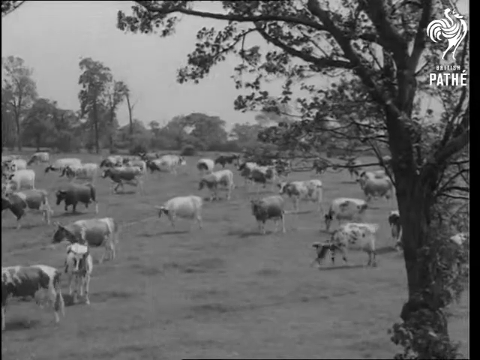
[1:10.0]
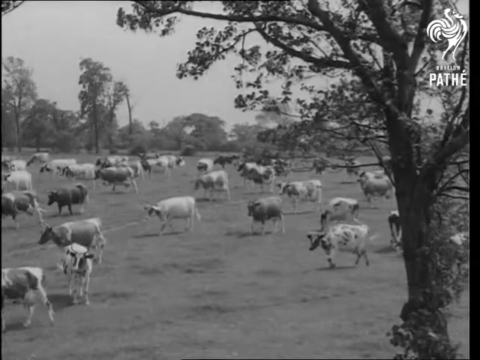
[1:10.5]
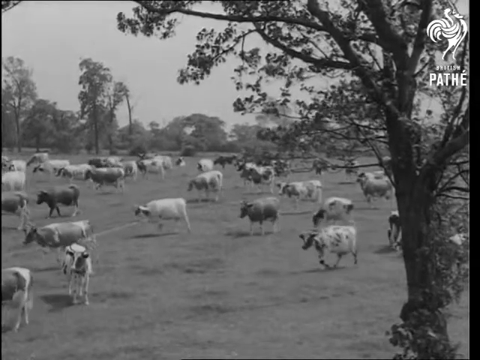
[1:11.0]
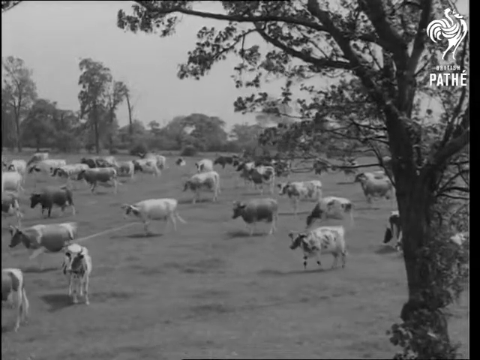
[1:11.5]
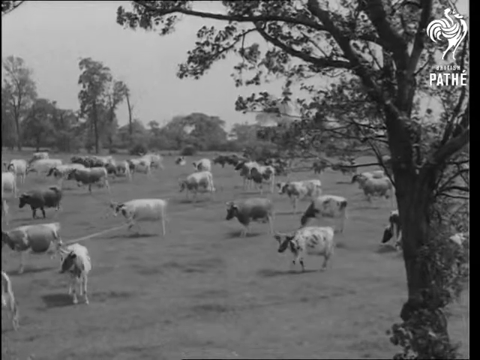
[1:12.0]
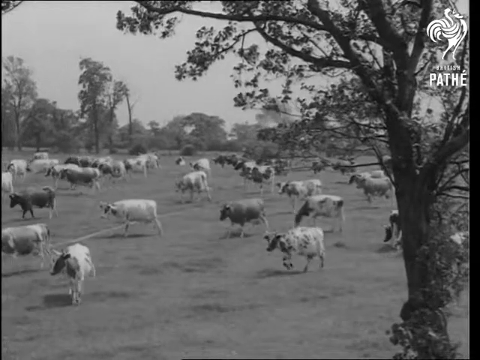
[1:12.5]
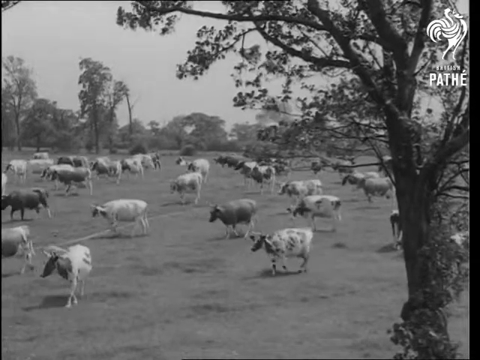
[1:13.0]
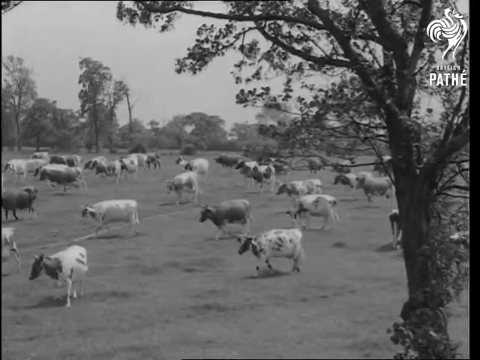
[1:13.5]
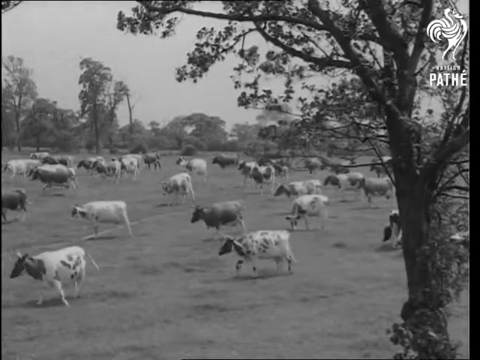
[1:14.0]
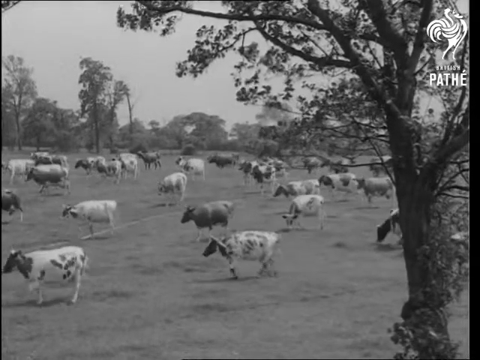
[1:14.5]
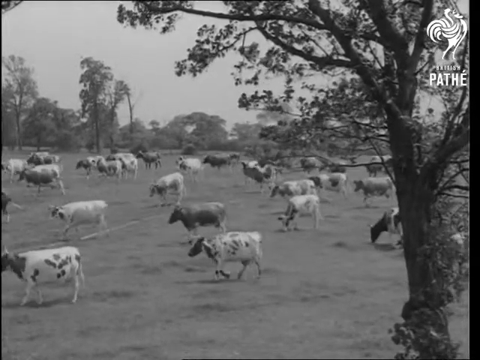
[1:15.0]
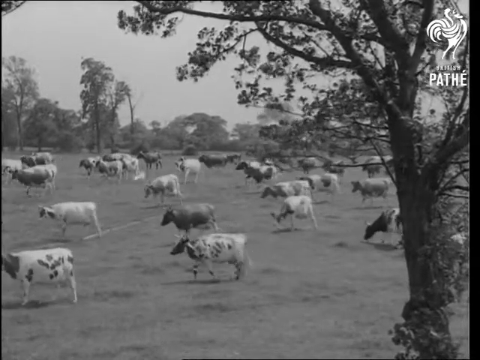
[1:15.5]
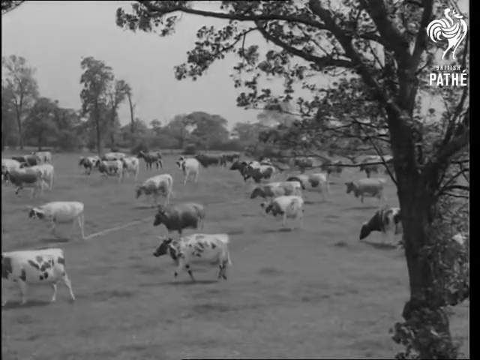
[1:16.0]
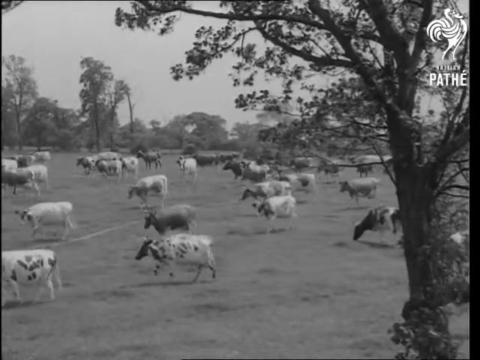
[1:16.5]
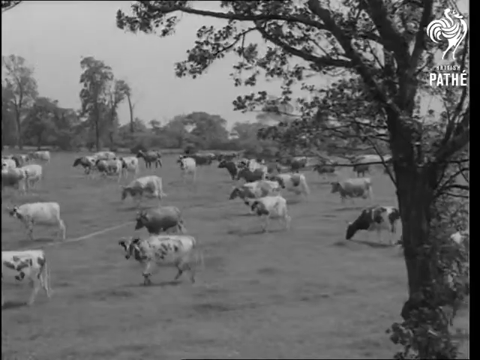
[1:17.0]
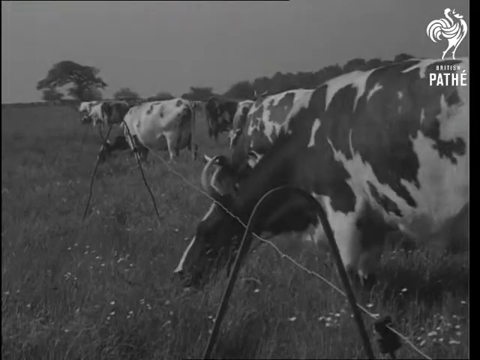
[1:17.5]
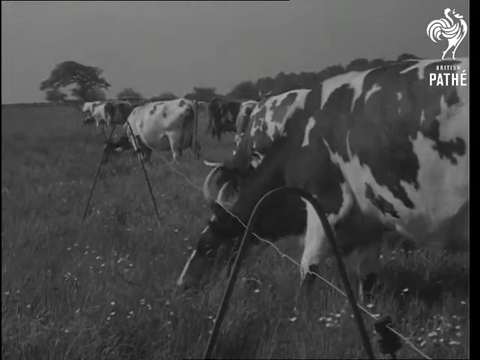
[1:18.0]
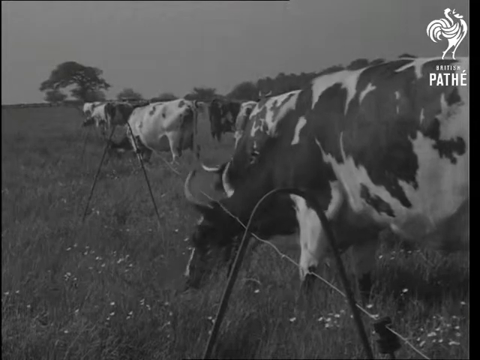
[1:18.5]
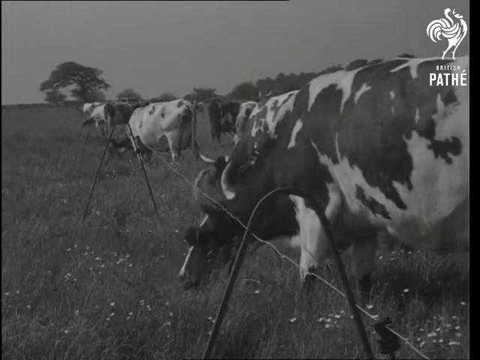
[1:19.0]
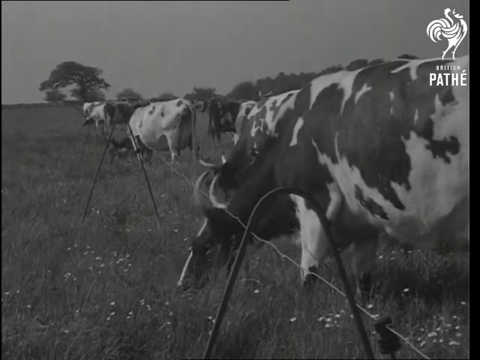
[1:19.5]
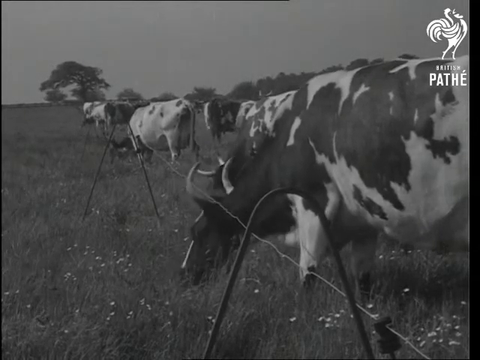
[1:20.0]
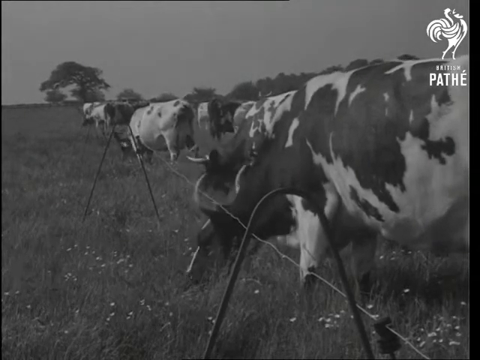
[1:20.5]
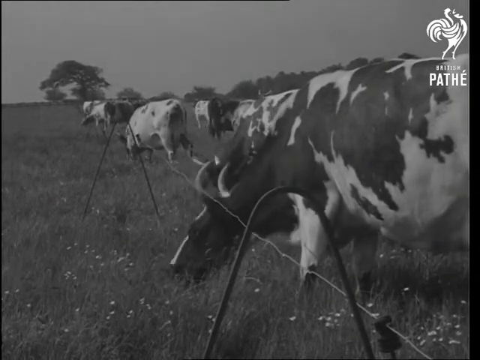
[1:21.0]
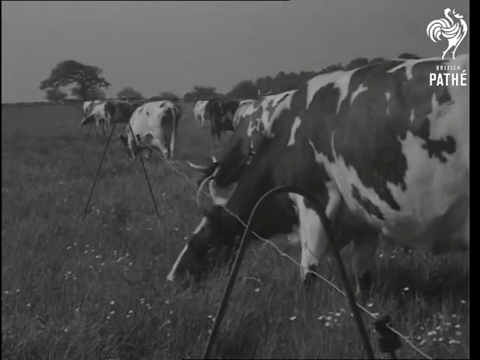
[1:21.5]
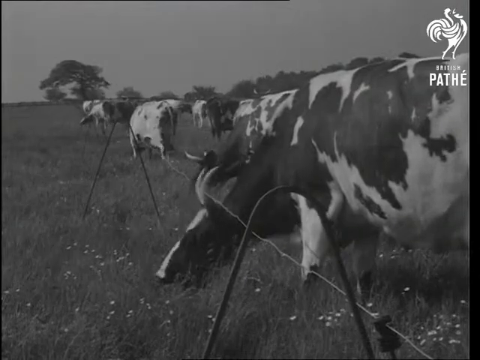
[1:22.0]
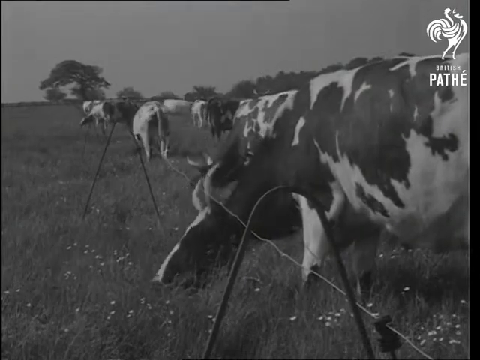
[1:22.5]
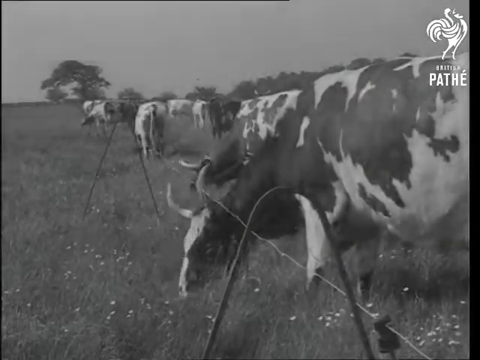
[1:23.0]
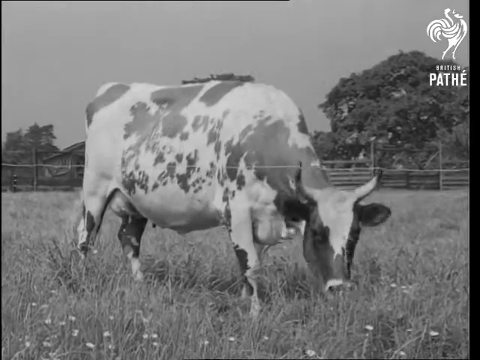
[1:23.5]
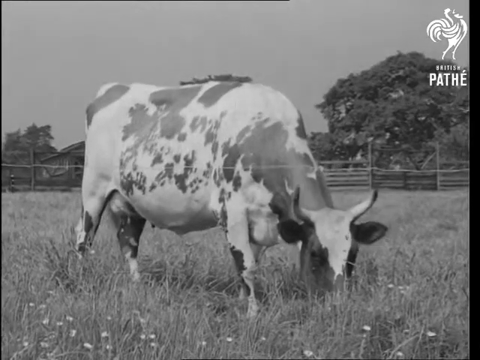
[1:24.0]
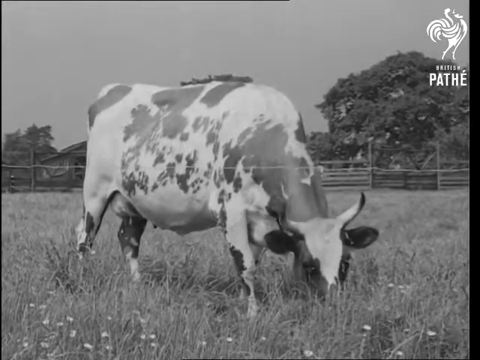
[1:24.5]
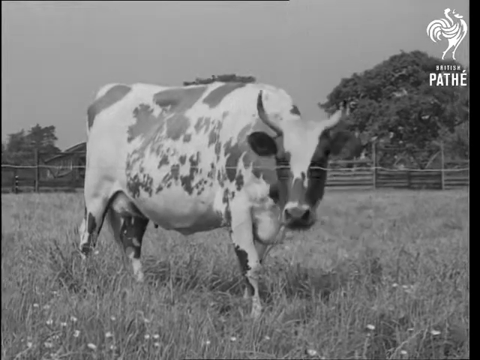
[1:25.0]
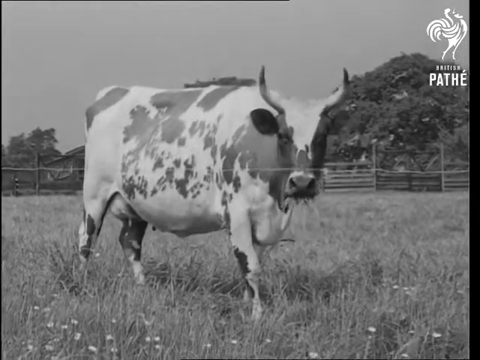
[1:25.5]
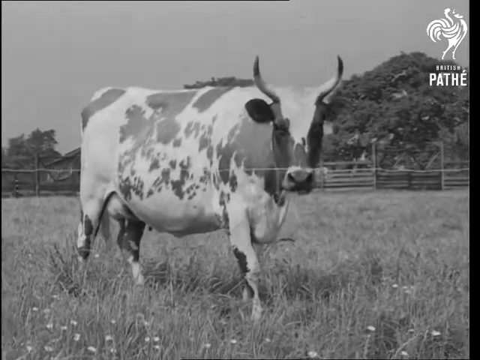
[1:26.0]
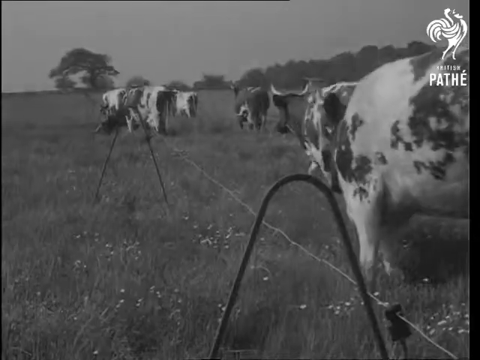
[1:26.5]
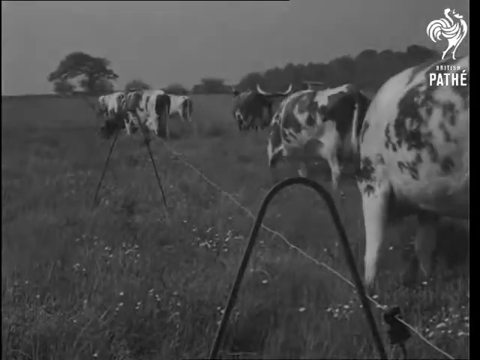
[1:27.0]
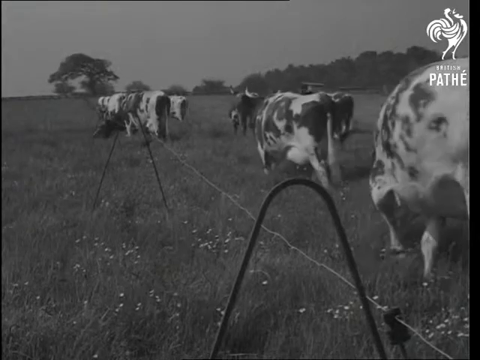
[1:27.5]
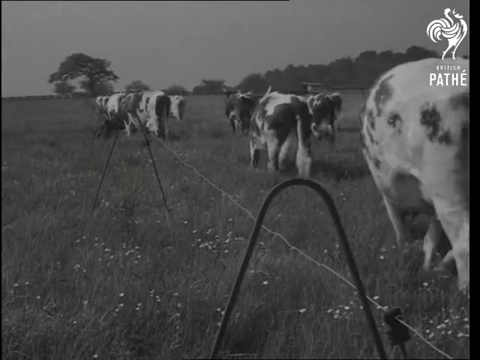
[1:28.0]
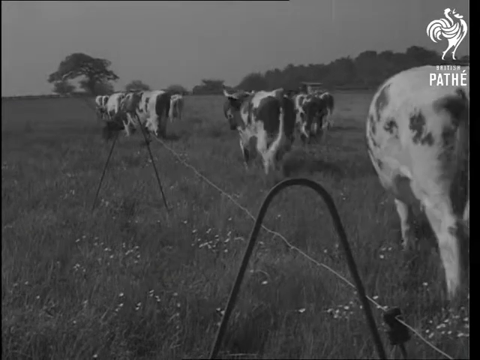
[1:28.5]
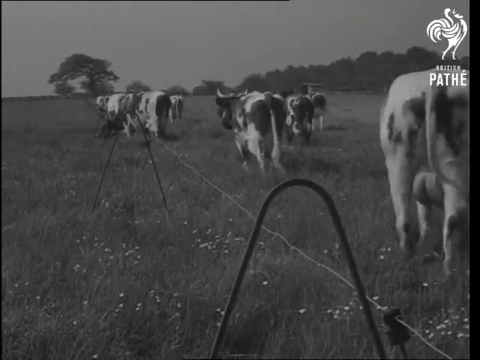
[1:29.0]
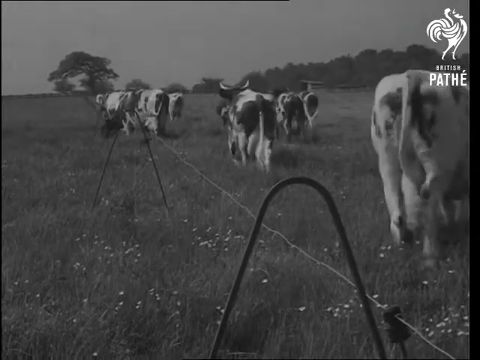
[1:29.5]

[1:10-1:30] Cows graze in an open field with some trees around the area, though the part they are in is mostly open grass. A close-up shows some of the cows eating, apparently by a wire barrier that keeps them enclosed, and the shot stays on them for a while. Next, one large white cow with black spots eats grass. Another angle shows many of the cows from behind. The farm is very open; where there is a fence, it is like a ranch fence, and there is also the wire barrier, which does not look like barbed wire, though it is hard to tell.